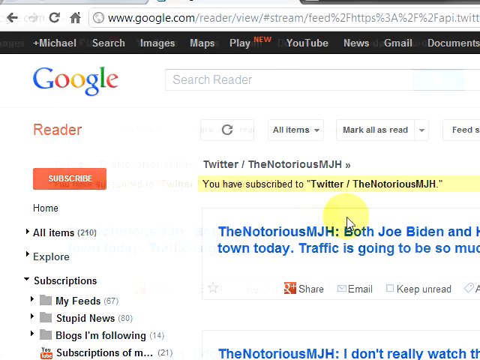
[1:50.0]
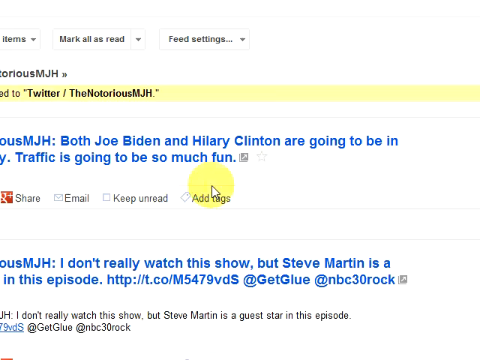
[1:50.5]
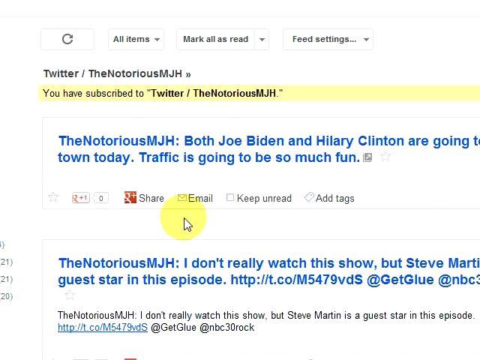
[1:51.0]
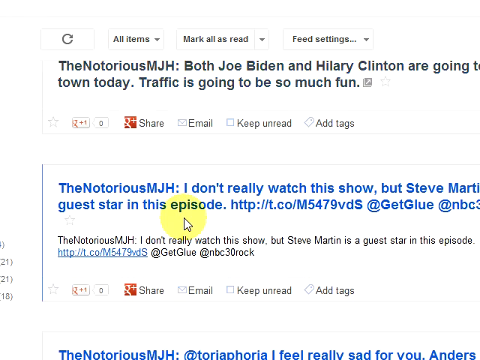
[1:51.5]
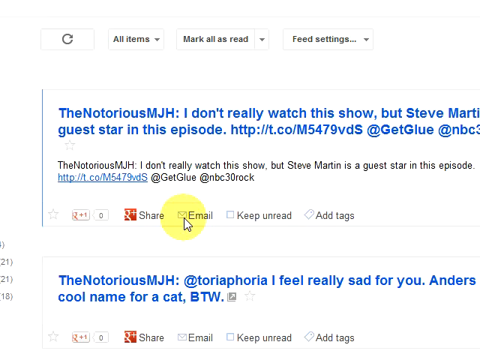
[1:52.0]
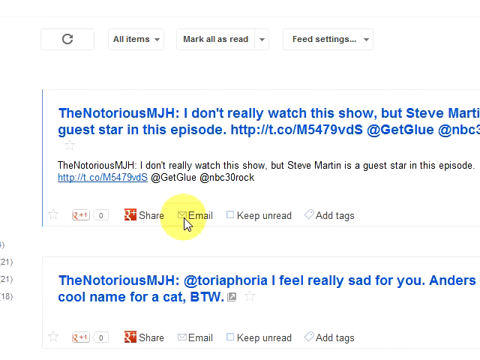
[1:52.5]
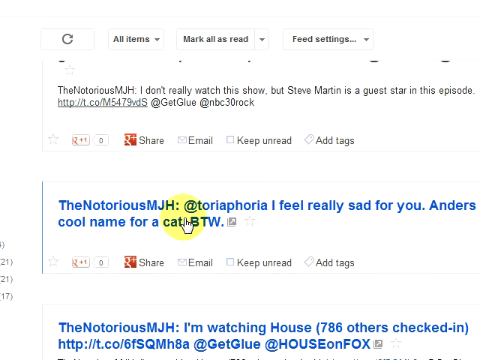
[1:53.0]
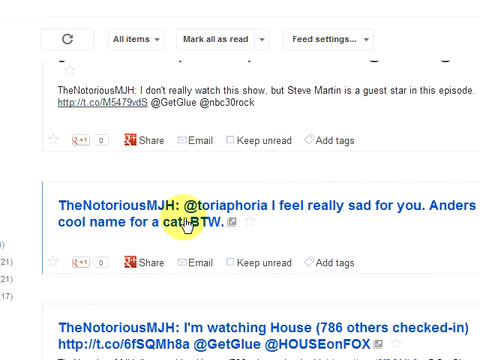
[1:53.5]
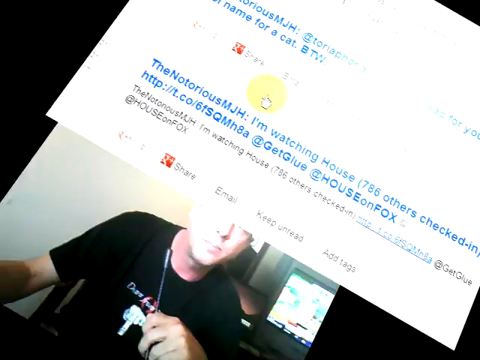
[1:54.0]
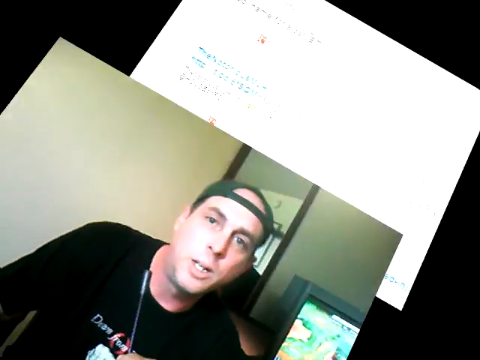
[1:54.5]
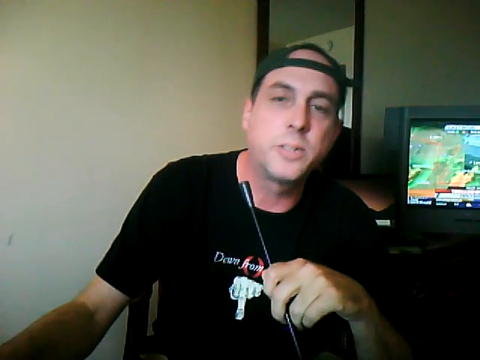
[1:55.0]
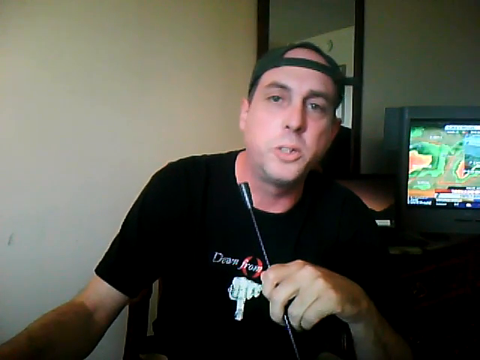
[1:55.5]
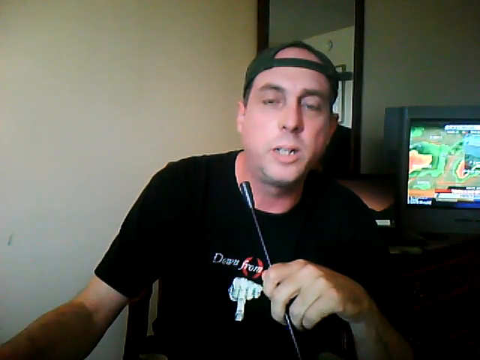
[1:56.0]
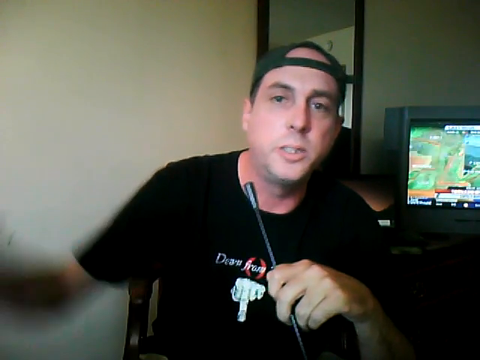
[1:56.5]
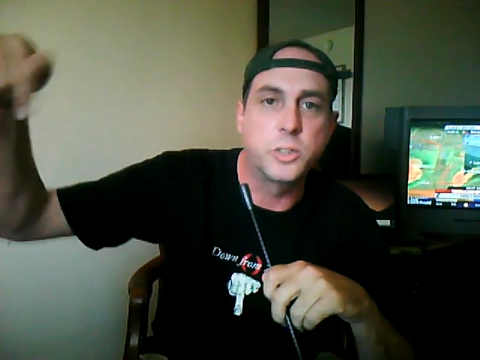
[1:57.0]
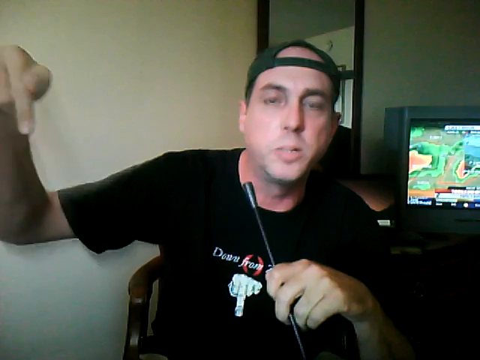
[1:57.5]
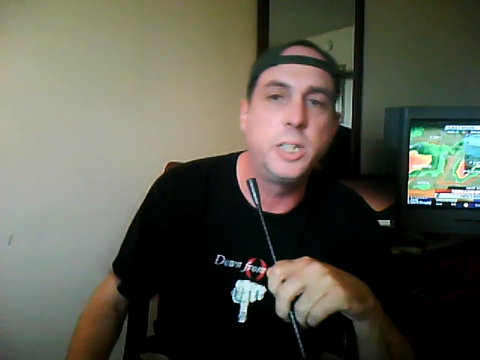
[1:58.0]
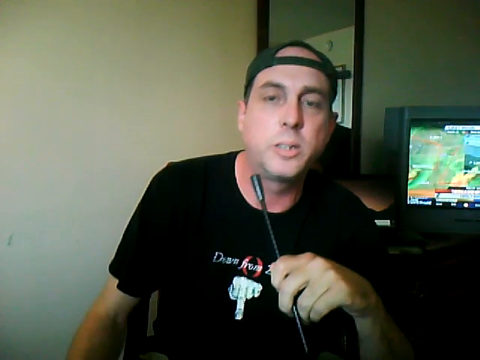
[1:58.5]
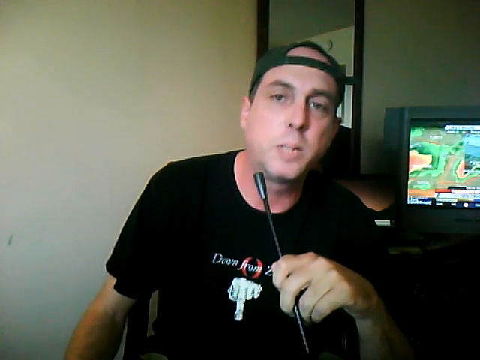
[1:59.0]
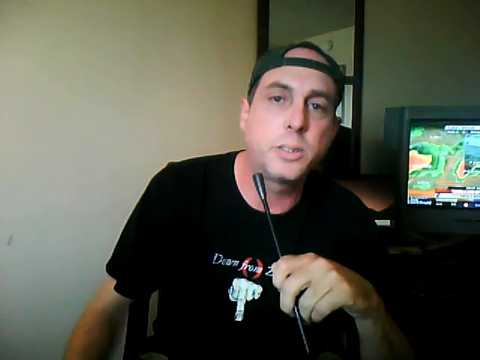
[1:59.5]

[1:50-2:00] Some other replies are shown, and the cursor moves to a button that says "email" and then somewhere else. The video then shows a man sitting in a chair, holding a microphone that looks sort of like a stick in his left hand while pointing down with his right hand. He wears a black t-shirt and a green hat that appears to be turned backwards, and he appears to be talking directly to the camera. In the background is a TV with some kind of graphical animation moving on it that looks like it might be the weather.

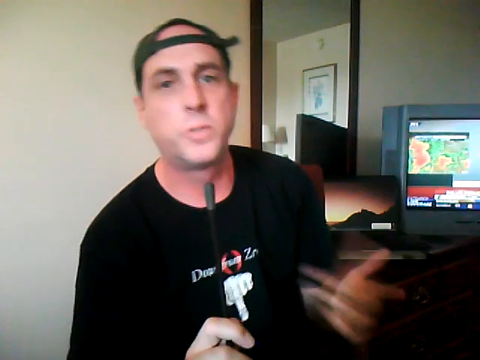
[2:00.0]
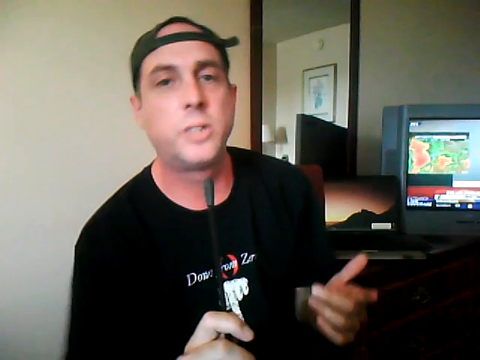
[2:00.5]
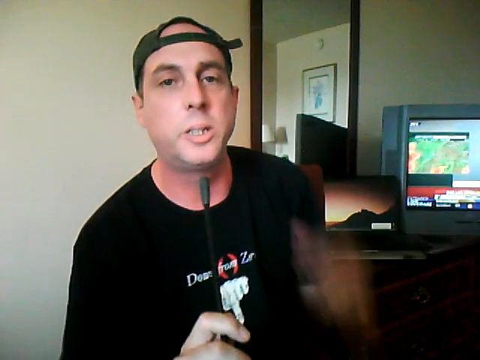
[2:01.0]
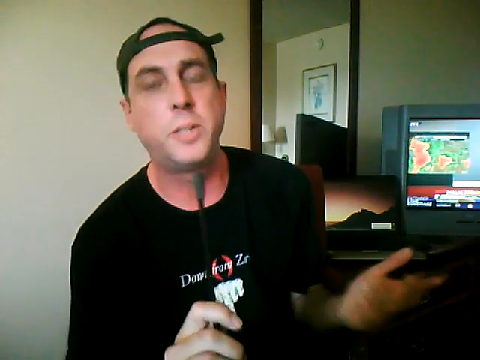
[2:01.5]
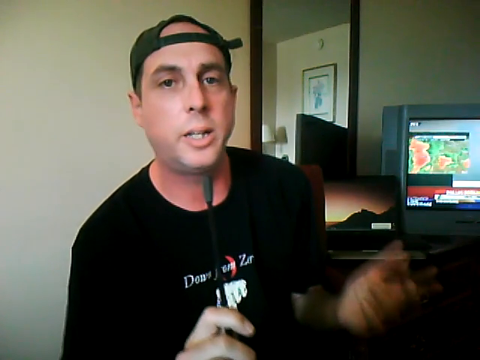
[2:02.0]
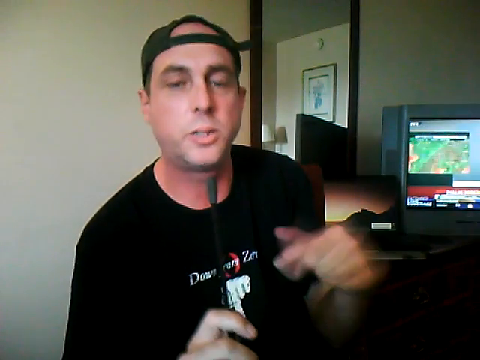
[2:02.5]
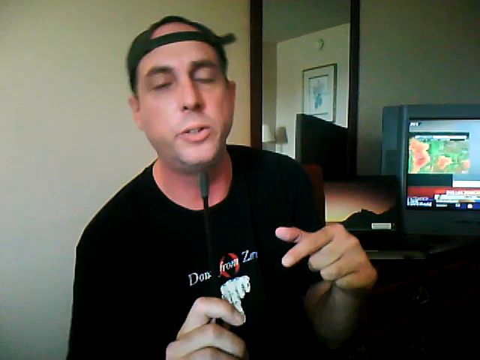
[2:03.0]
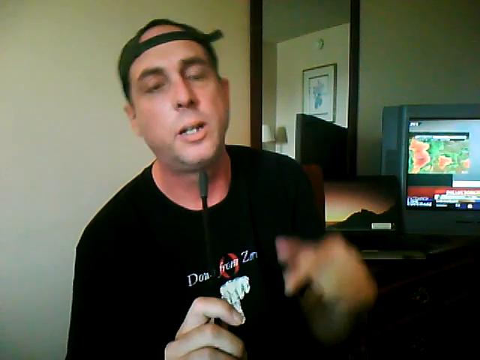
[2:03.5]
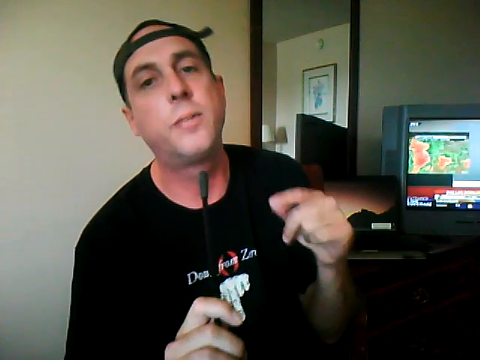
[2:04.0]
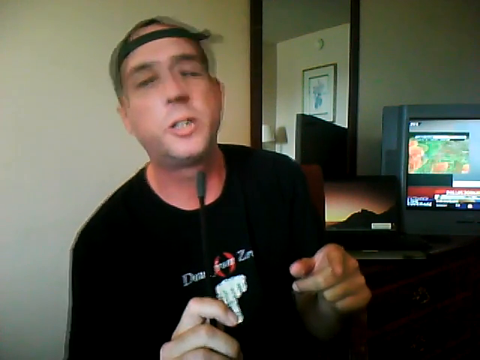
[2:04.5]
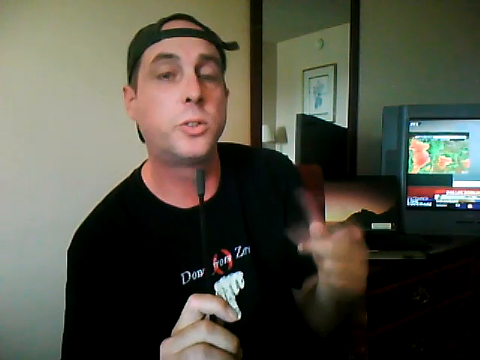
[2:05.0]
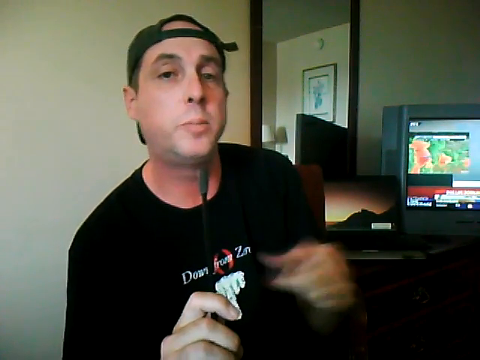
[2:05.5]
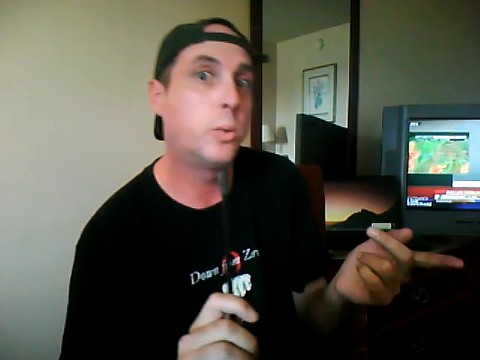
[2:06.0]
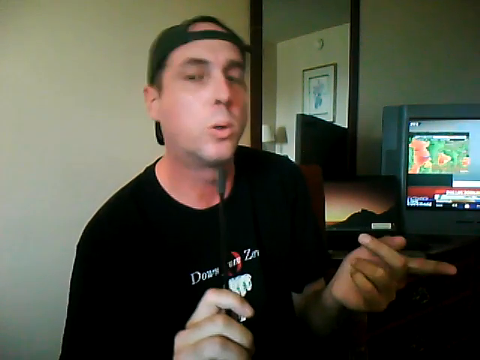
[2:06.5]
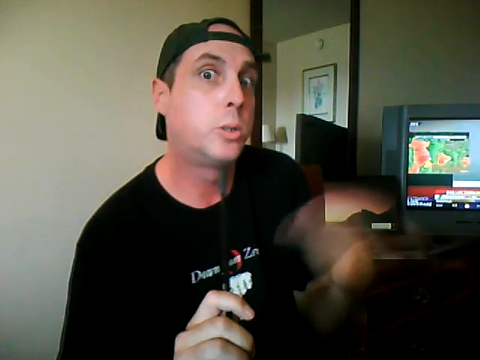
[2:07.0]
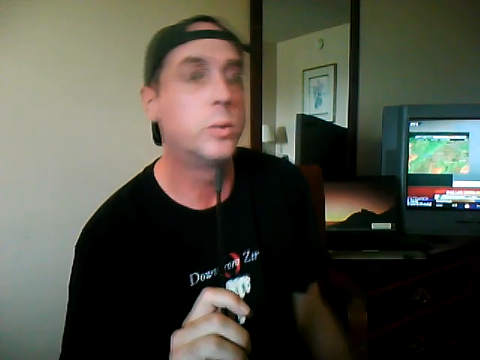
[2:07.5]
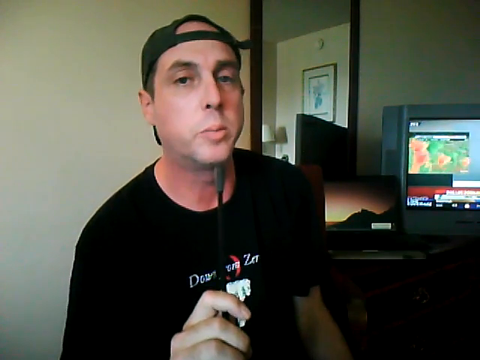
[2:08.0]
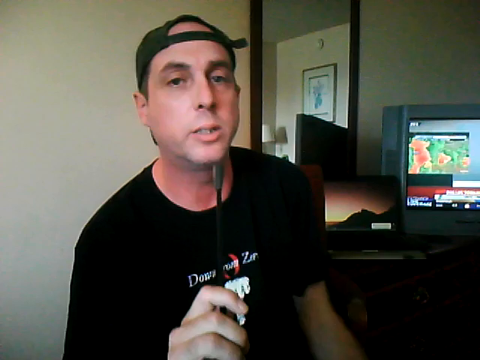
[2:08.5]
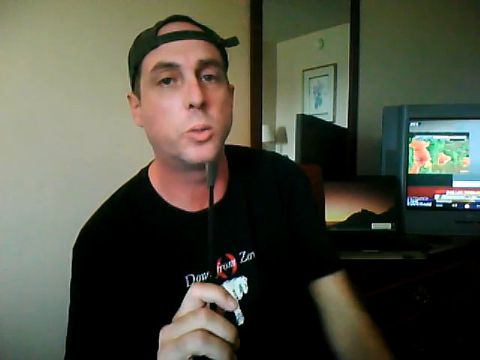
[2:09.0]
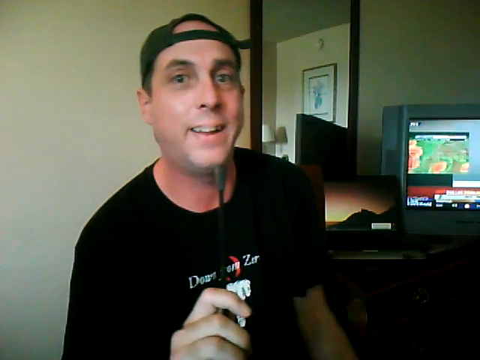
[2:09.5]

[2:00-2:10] The man sits in his chair, now holding the microphone in his right hand and gesturing with his left. He wears the black t-shirt and a green baseball cap turned around. In the background is a TV that looks like it is displaying some sort of weather or heat map, and perhaps a laptop with a screensaver of a sunset with some kind of hills or mountains. Further back, there looks to be another room, with a lamp visible and a picture frame hung on the wall. As he speaks to the camera, he gestures with his left hand, making pointing gestures toward the camera or toward his left, the viewer's right.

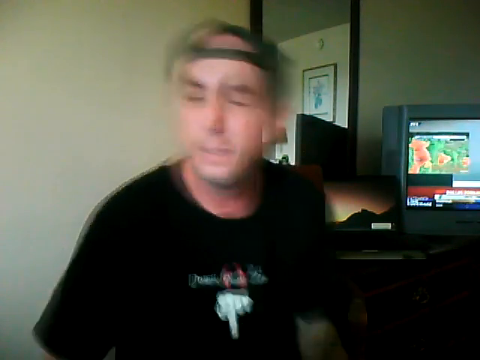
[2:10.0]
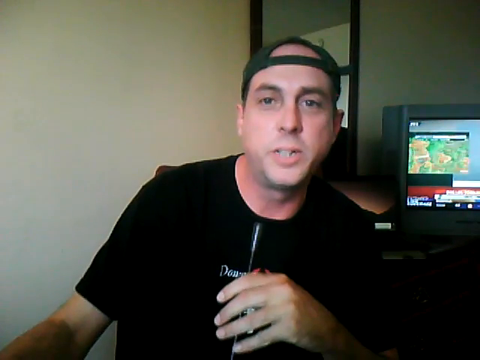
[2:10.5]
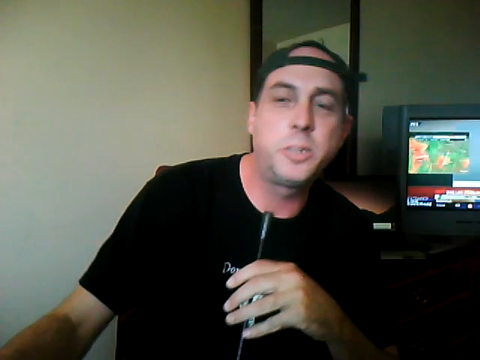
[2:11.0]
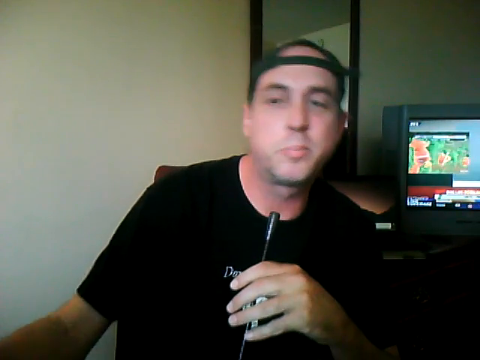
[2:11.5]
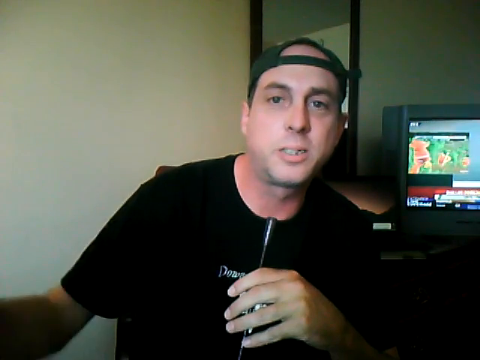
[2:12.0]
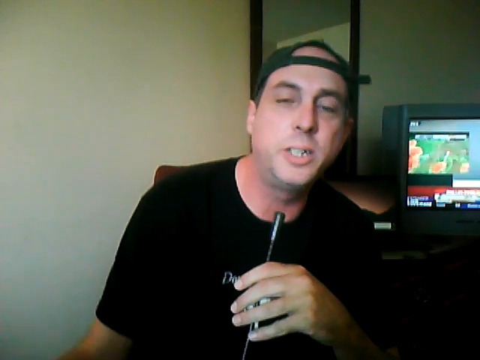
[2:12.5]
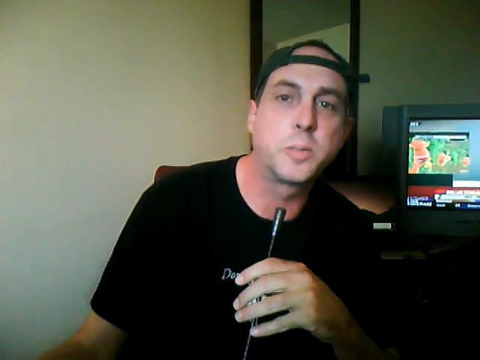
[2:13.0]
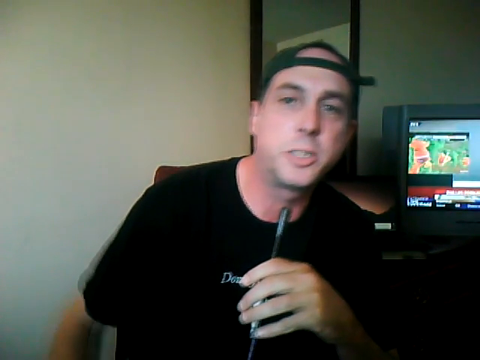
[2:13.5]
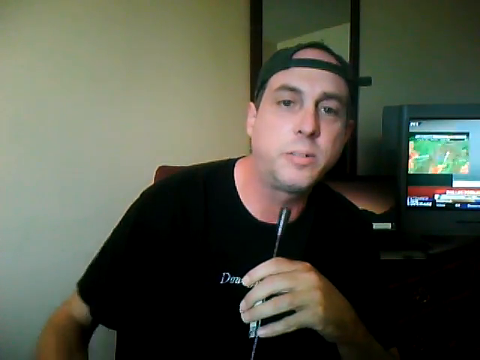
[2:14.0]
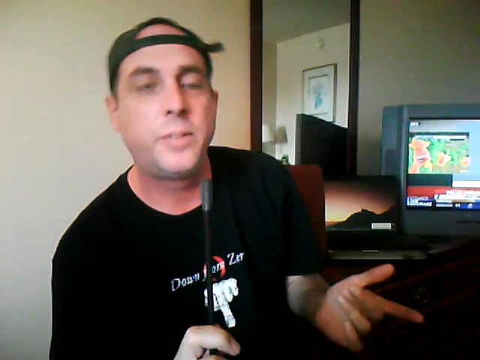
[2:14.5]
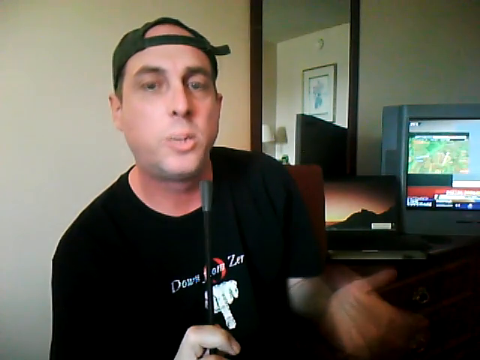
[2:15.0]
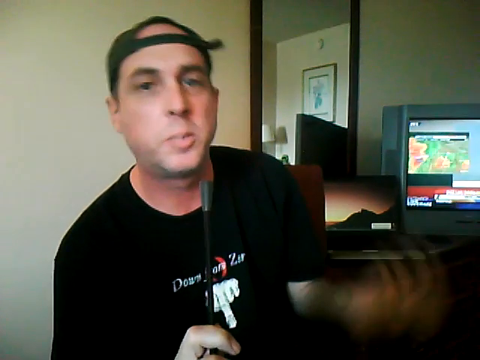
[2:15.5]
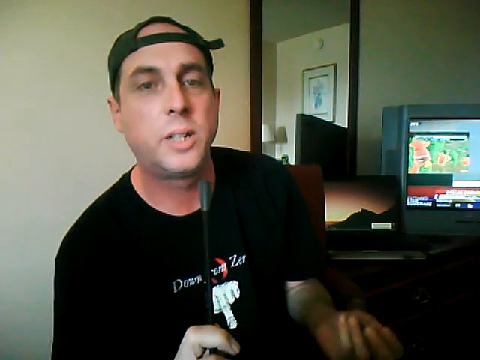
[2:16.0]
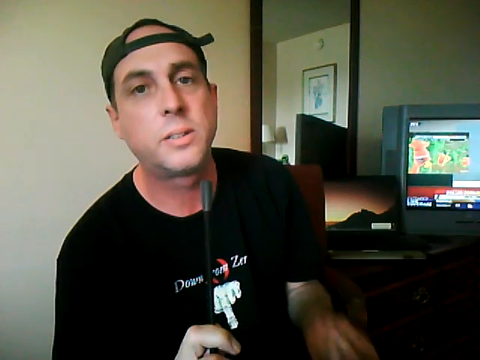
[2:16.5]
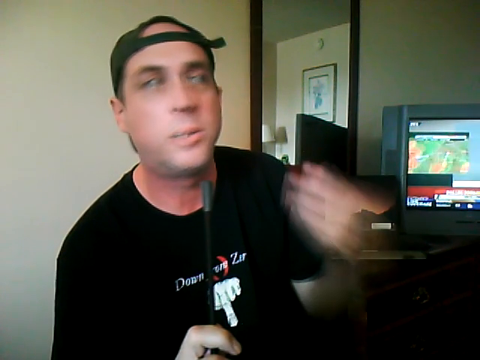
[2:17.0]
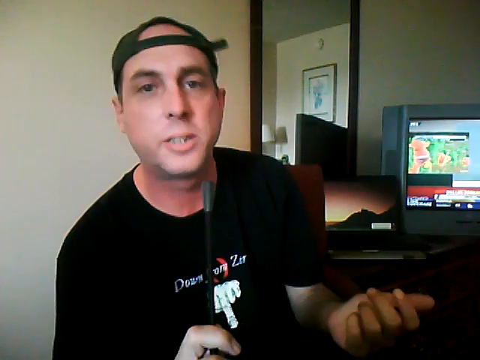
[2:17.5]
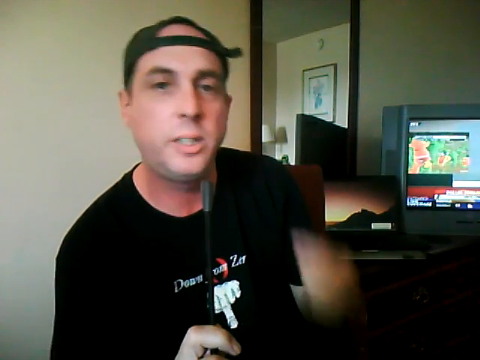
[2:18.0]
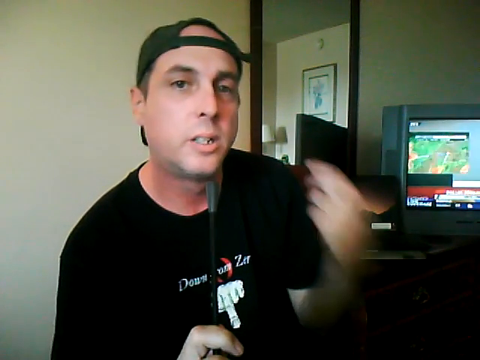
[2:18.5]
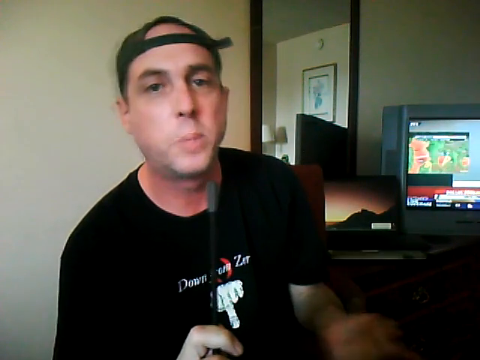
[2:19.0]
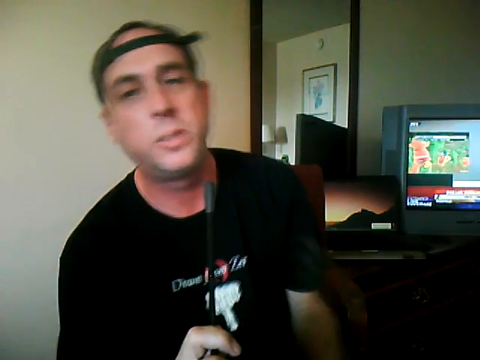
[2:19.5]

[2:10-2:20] The man holds the microphone in his left hand, while his right hand appears to be somewhere off camera. He sits in a chair, the back of which peeks out behind his right shoulder. He wears a black t-shirt and a green baseball cap turned backwards. In the background is a TV that appears to display some sort of heat map. He talks directly to the camera, then switches the microphone to his right hand, freeing his left hand, which he holds with the pinky, ring and middle fingers sort of bent and the index finger and thumb kind of pointed out.